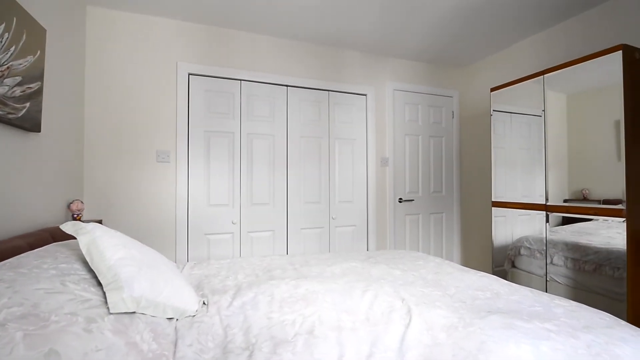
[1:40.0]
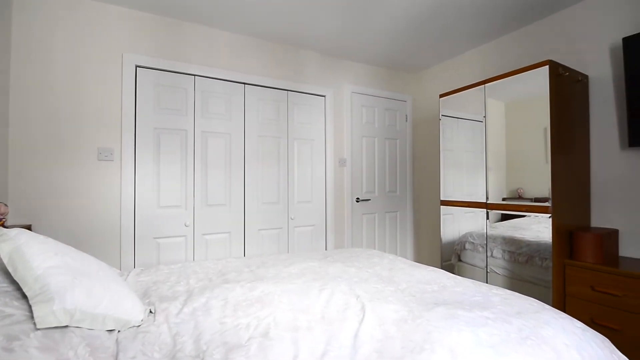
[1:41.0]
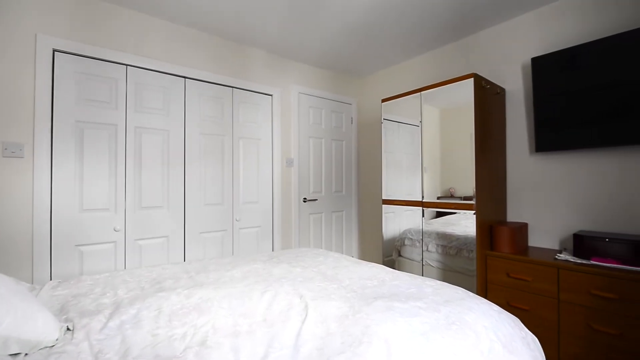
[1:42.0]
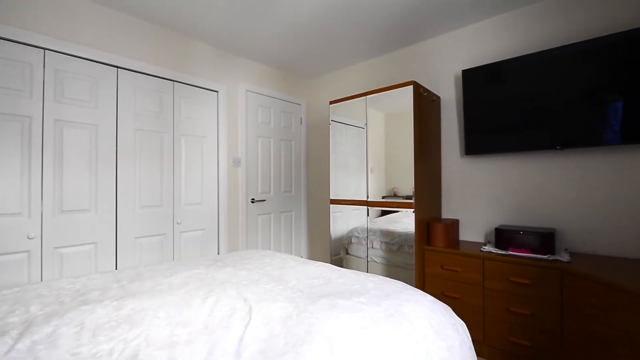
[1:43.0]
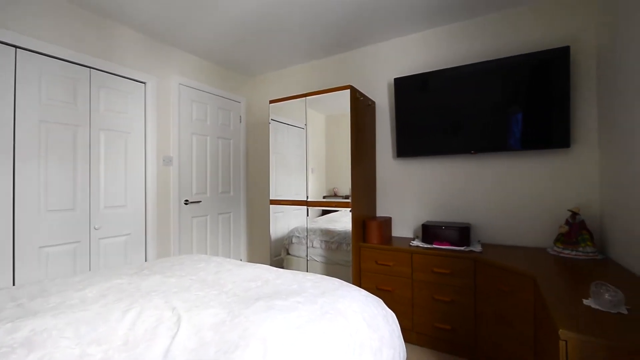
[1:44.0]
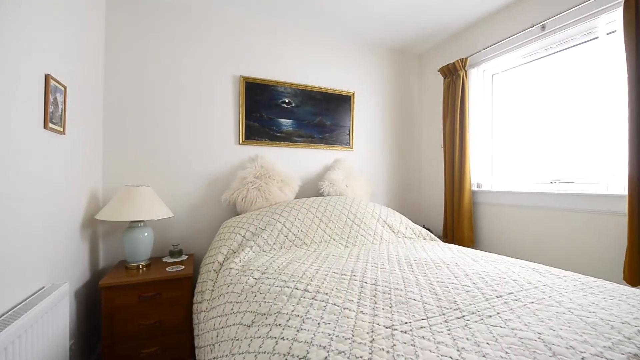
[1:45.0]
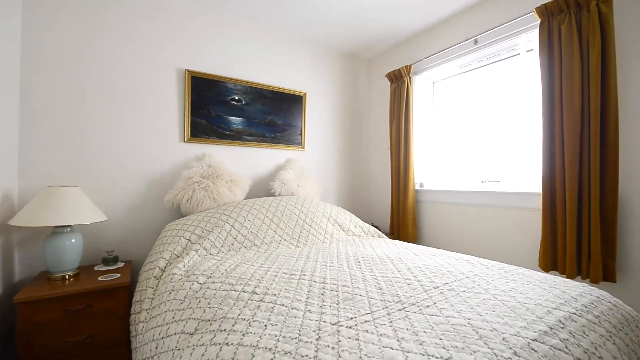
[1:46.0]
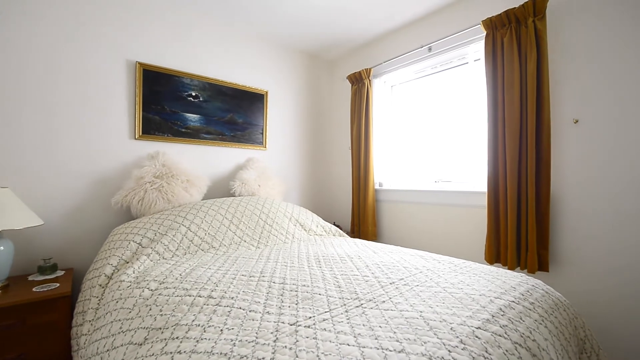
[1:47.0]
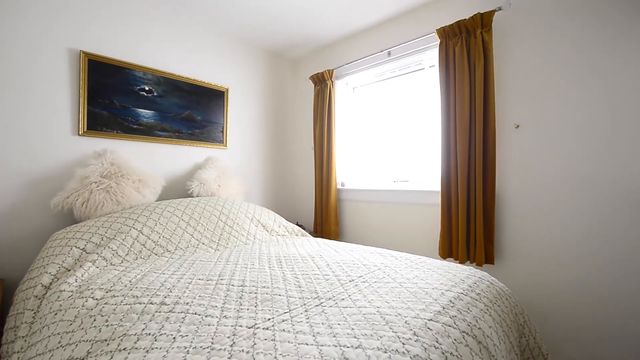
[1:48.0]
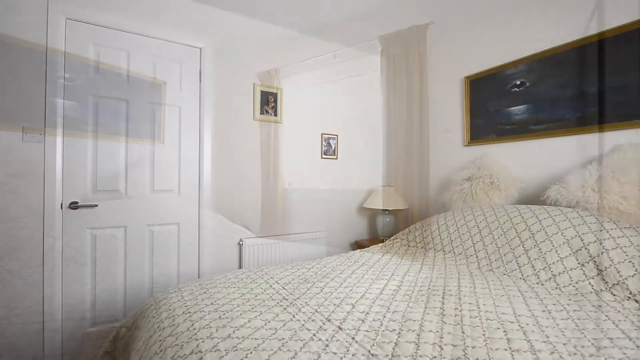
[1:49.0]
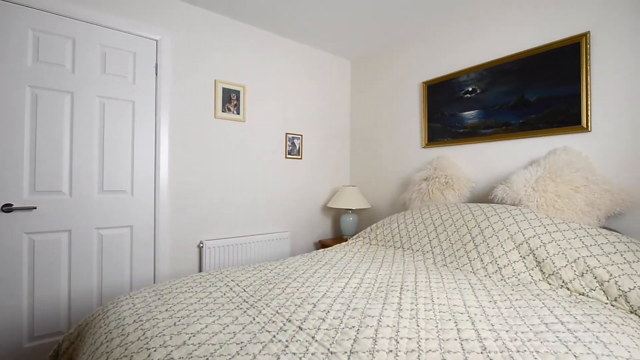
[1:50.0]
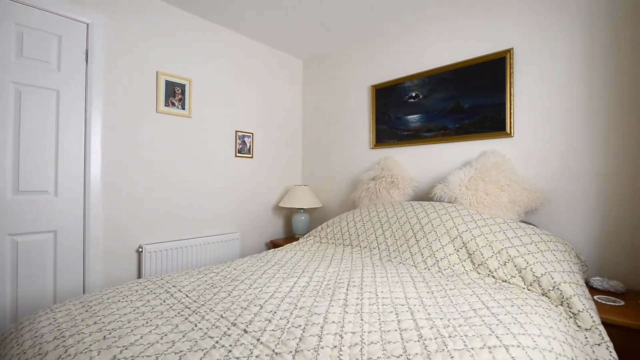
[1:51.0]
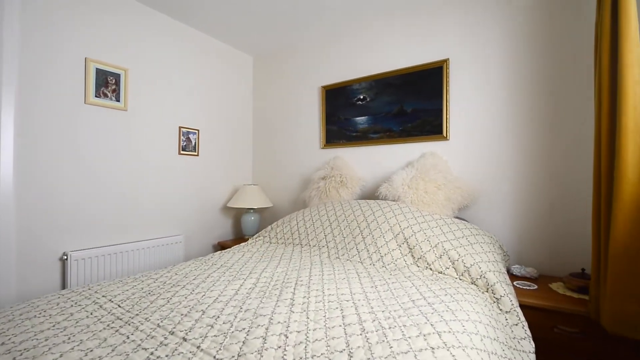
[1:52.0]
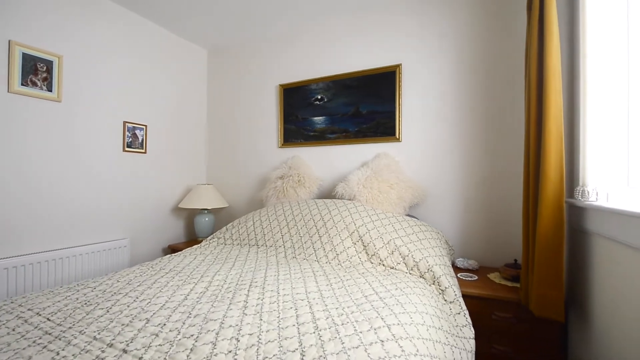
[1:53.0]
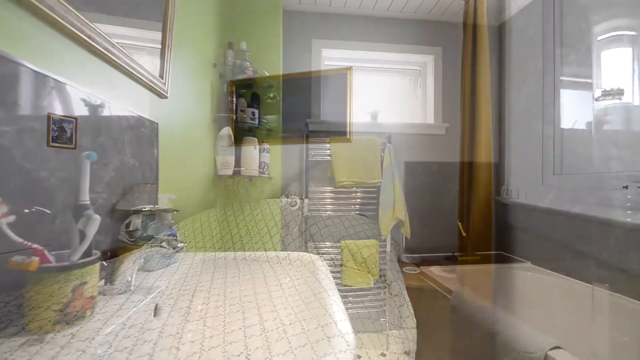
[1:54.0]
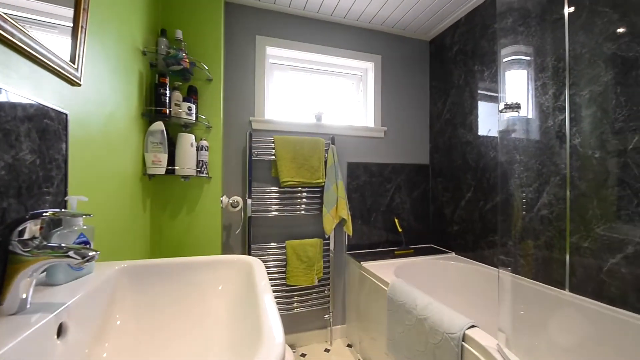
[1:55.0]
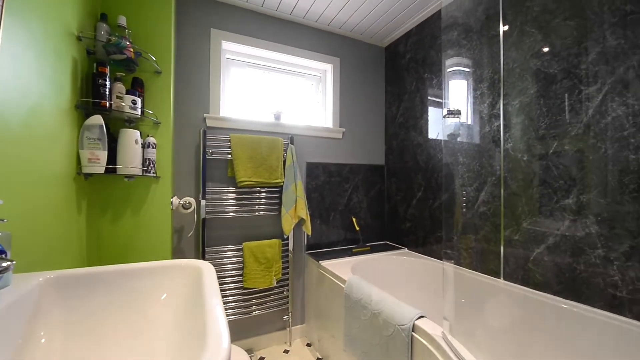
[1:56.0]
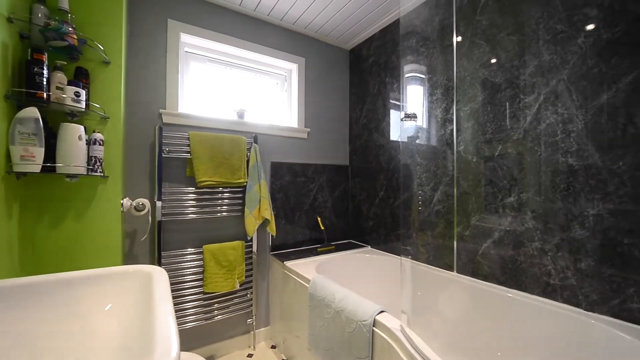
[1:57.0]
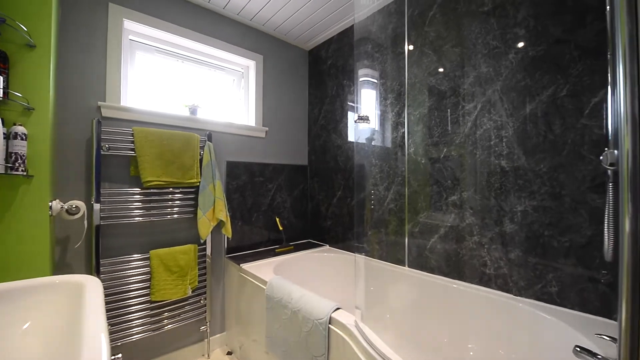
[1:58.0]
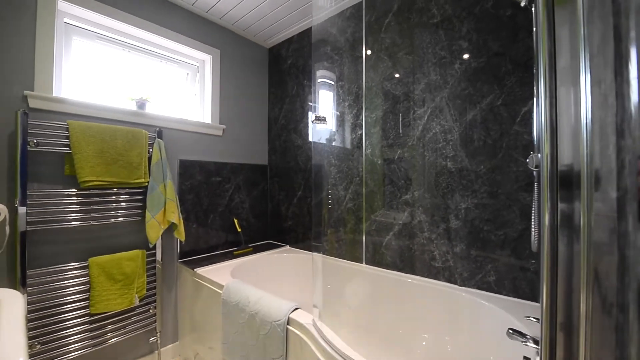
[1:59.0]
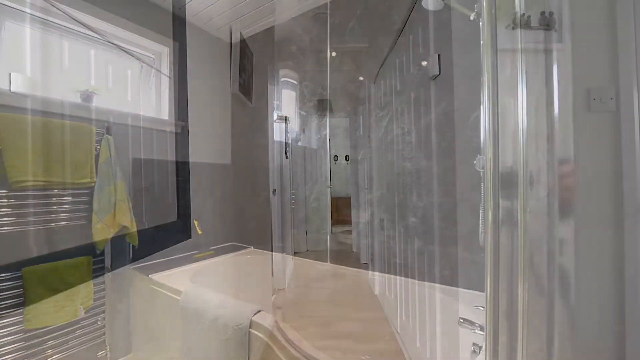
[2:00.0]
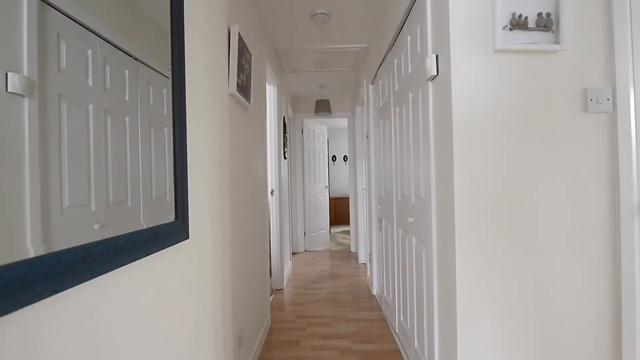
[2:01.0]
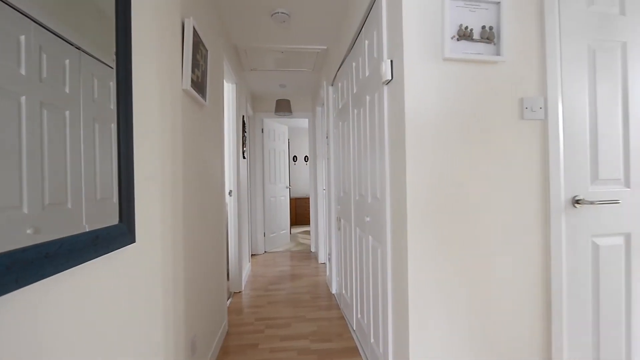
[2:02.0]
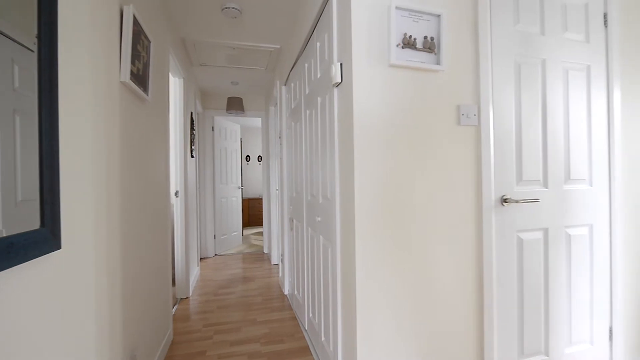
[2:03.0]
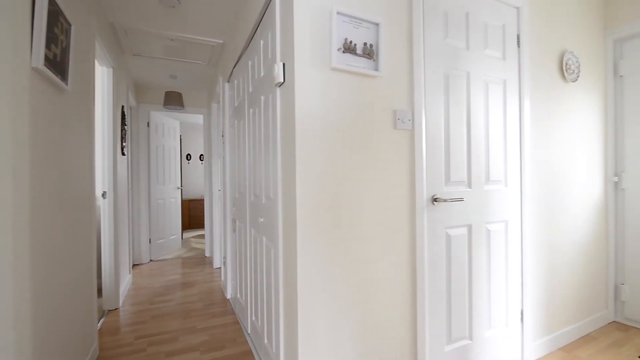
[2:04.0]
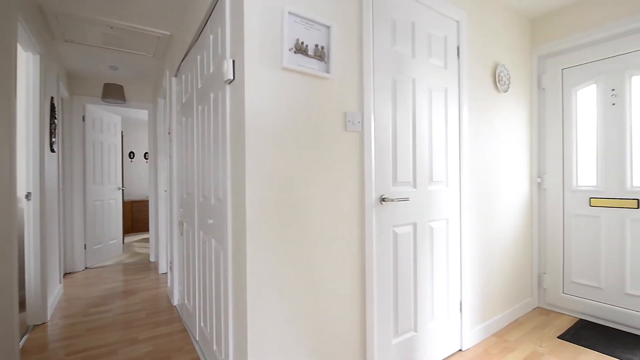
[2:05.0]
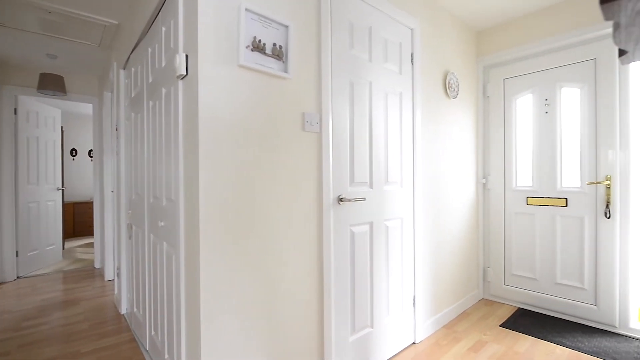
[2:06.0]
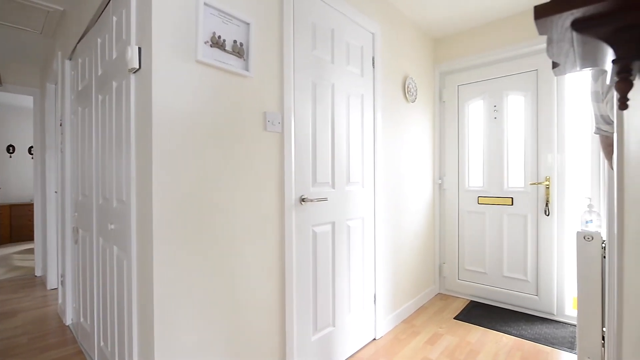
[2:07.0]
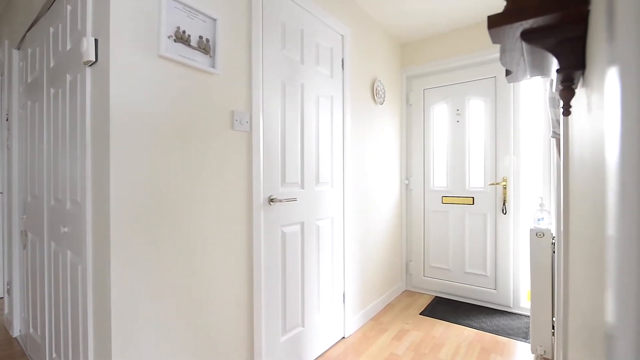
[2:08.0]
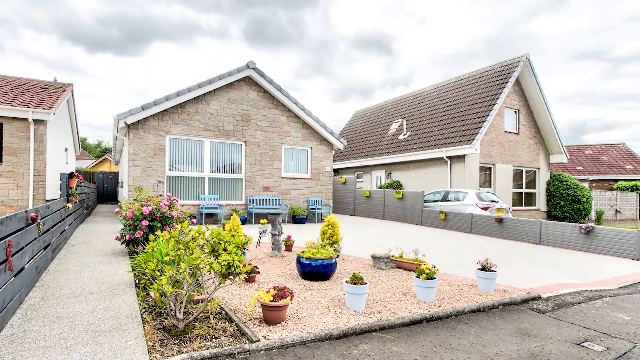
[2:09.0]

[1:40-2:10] The camera pans around the bedroom, showing a big mirrored wardrobe with a chest of drawers next to it. Above the chest of drawers is a very big TV, and there are some ornaments on top of the chest of drawers. The video moves to what looks like a single bedroom, with a few pictures on the walls, white walls, white ceilings, and curtains of a sort of dark orangey-brown, mustardy colour. There is a little bedside table with a small lamp on it, a throw over the bed and two fluffy cushions, and it seems to be bright daylight outside. An alternative view shows the white door and the radiator, and reveals bedside cabinets on both sides of the bed. A dissolve leads to a shot panning around the bathroom, which has very bright green walls, green towels, a clad ceiling like the kitchen's, and sort of granite-effect panels around the bath. There is a heated towel rail, a toilet roll holder, lots of toiletries in a tidy on the wall, and a glass screen, presumably a shower. The view then looks down the hallway, with a multitude of white doors and possibly a mirror on the wall, and shows the front door from the inside. The video then moves back out to an external shot of the property.